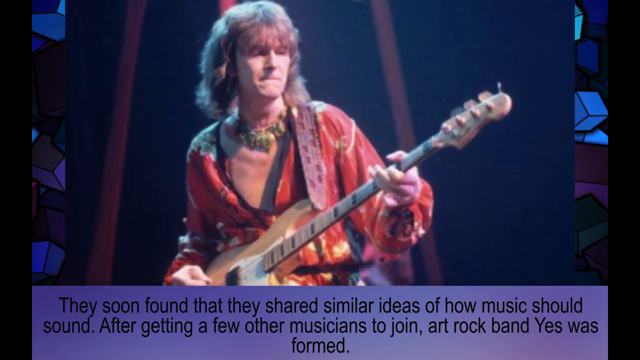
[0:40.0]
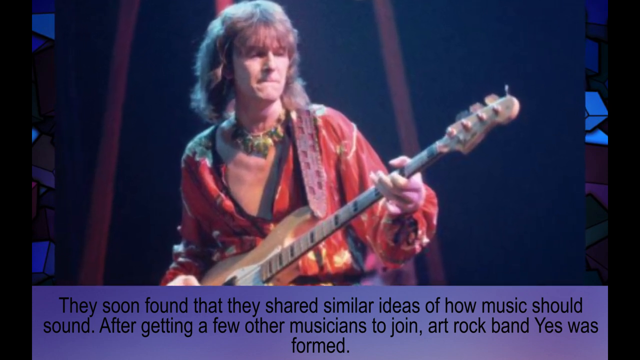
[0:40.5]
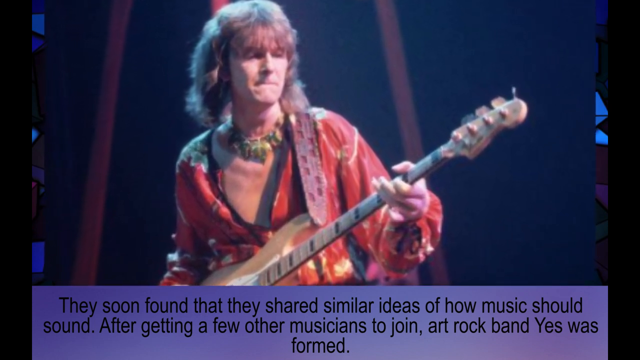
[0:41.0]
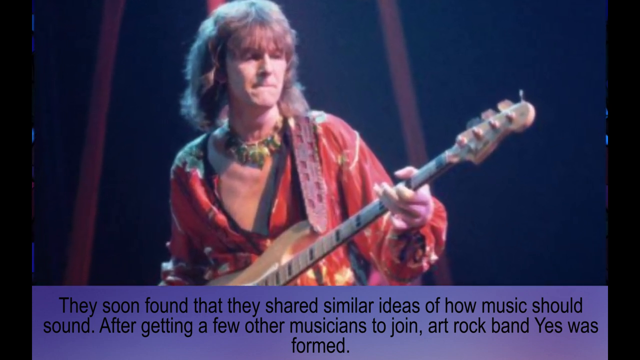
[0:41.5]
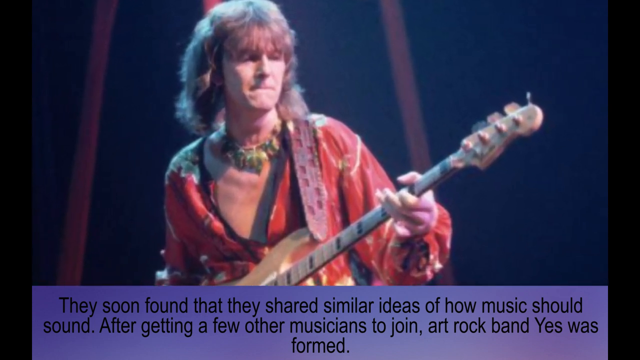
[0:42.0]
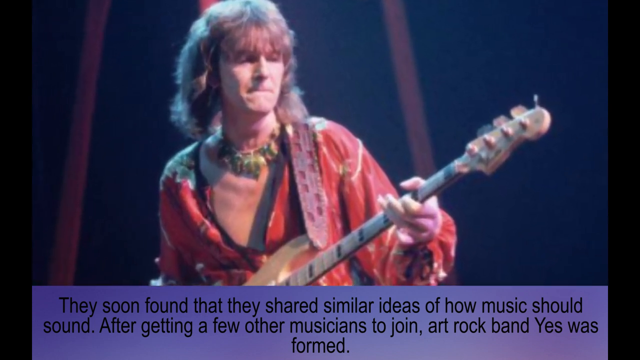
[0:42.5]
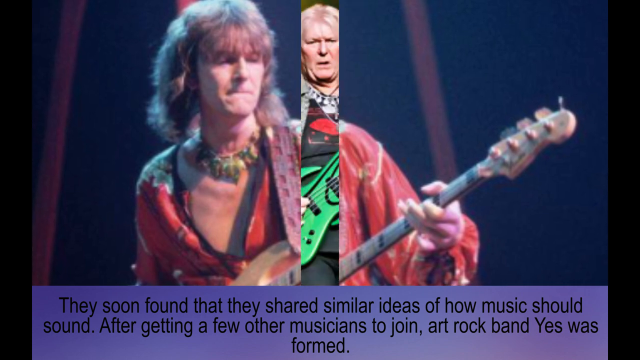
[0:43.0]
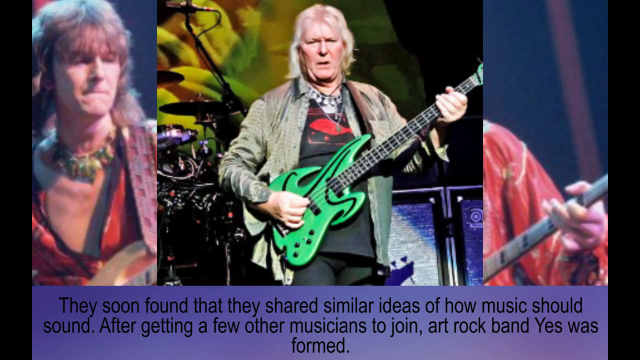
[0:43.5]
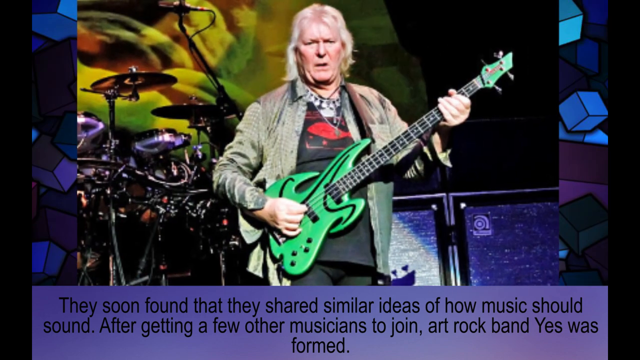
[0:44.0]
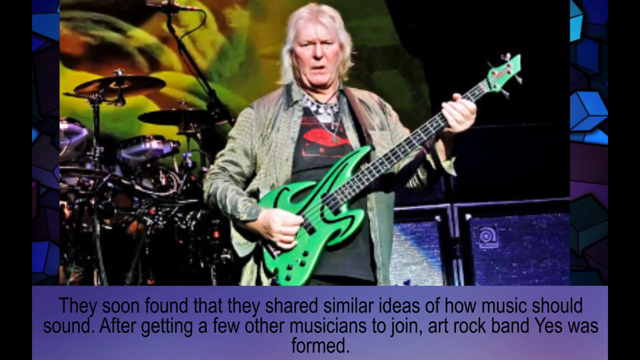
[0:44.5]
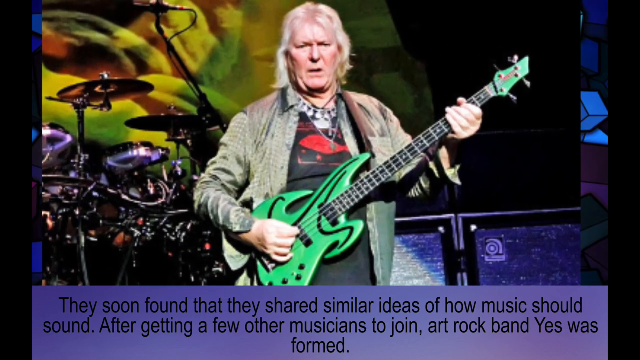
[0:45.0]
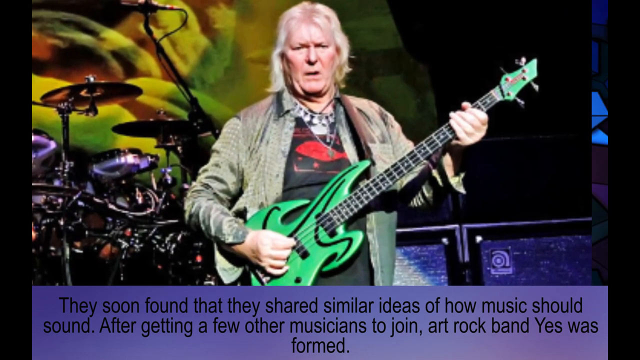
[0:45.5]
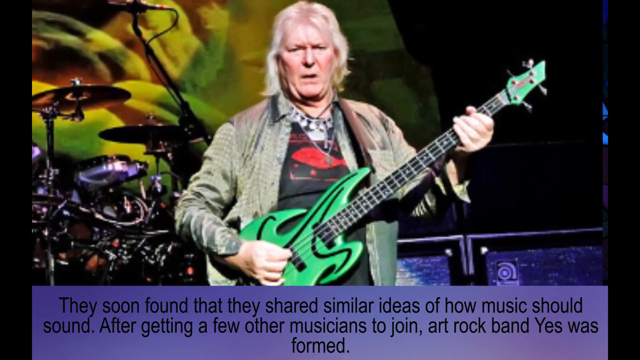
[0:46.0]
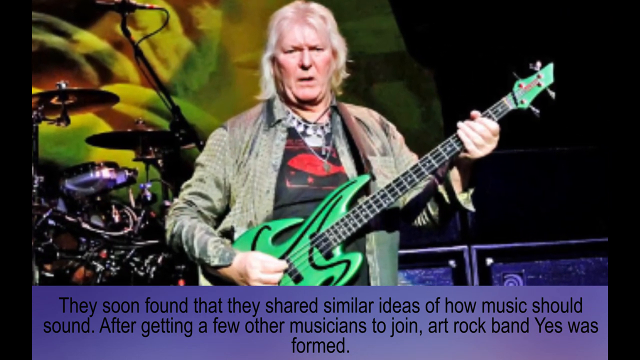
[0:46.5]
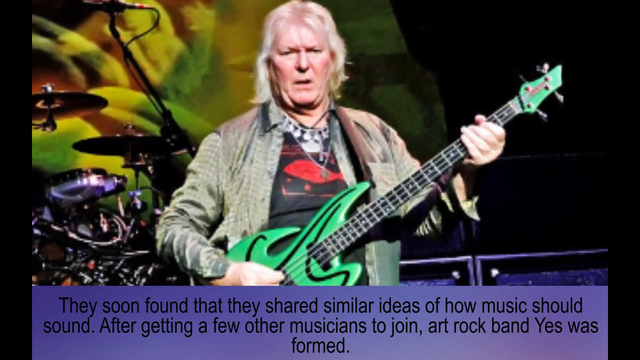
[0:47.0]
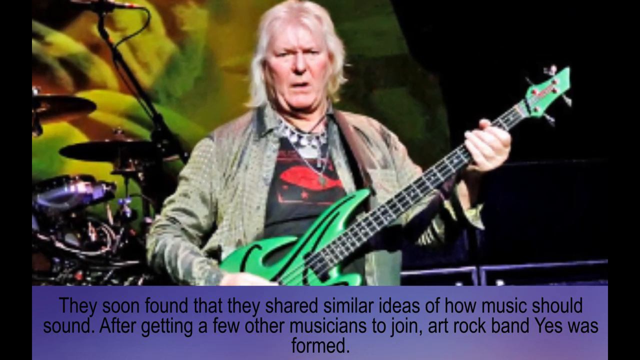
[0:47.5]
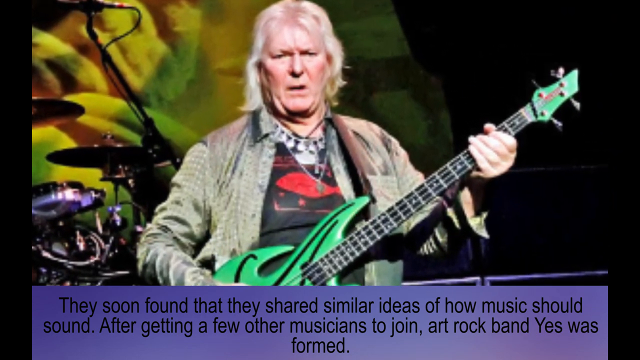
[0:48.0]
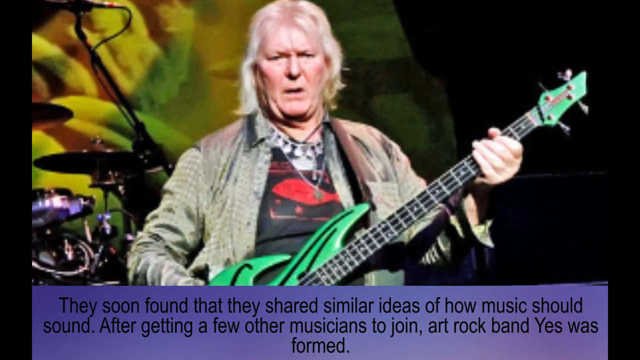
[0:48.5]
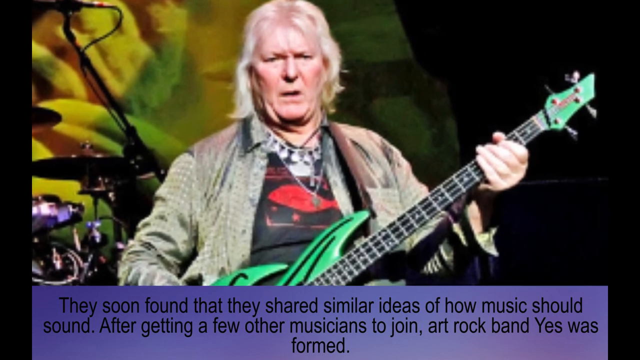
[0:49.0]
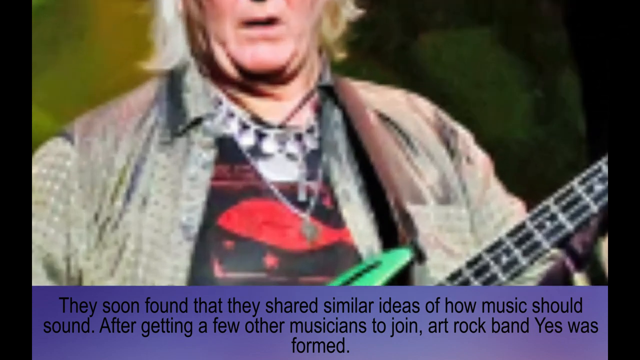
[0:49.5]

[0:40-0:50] A still image shows Chris Squire of the band Yes on stage playing his guitar, wearing a red shirt. The next image shows him as an older man, standing on stage playing a green guitar with black accents, wearing a silver-colored overshirt with a black shirt underneath. Text at the bottom of the screen reads: "they soon found they had shared similar ideas of how music should sound. After getting a few other musicians to join, the art rock band, Yes, was formed."